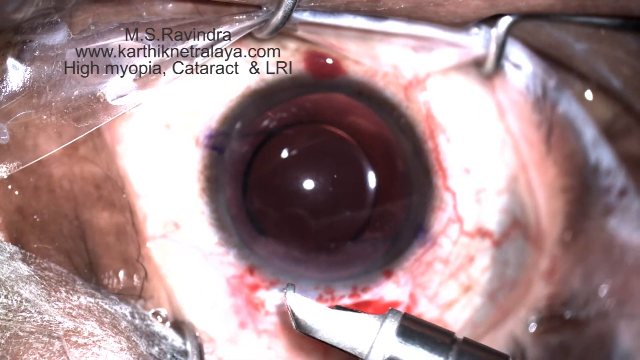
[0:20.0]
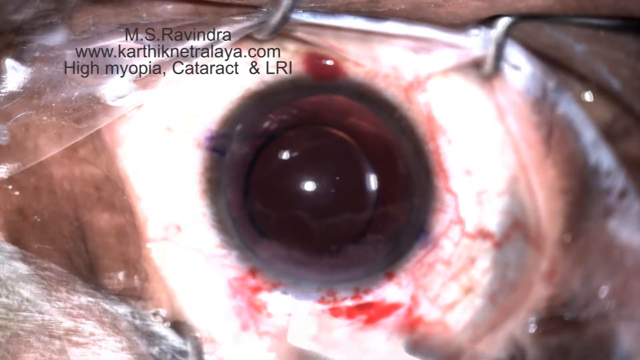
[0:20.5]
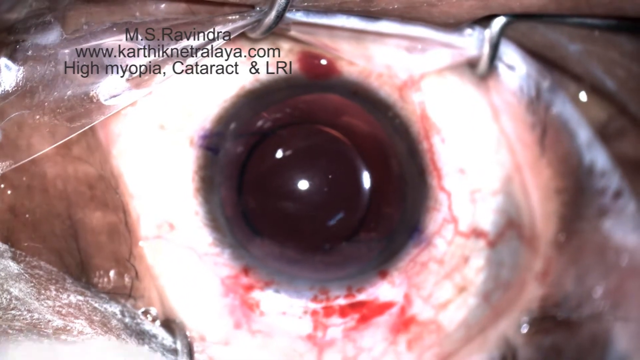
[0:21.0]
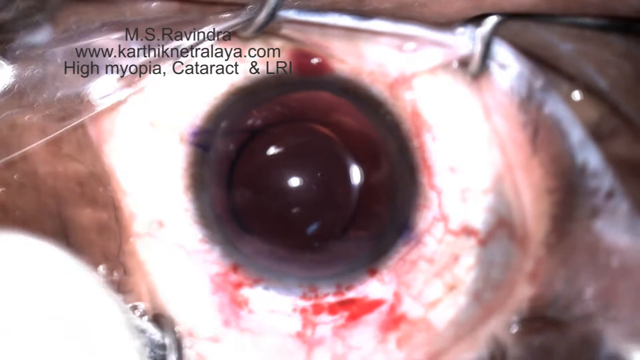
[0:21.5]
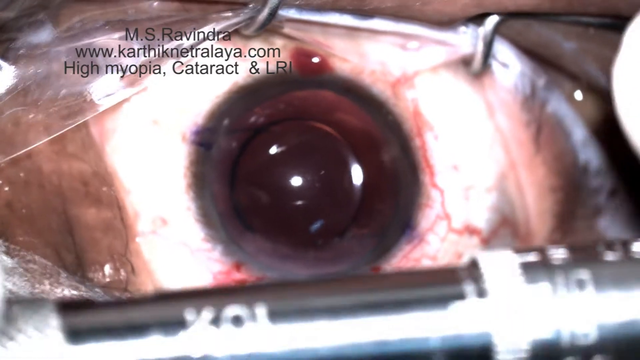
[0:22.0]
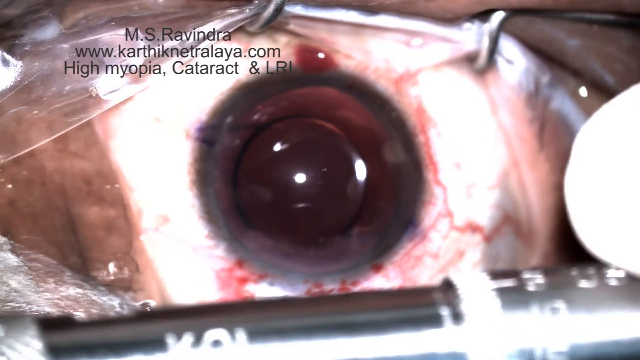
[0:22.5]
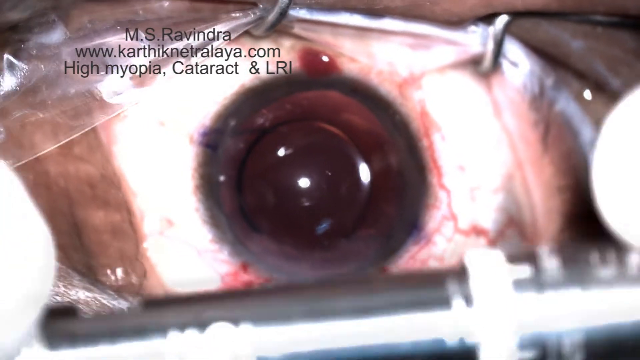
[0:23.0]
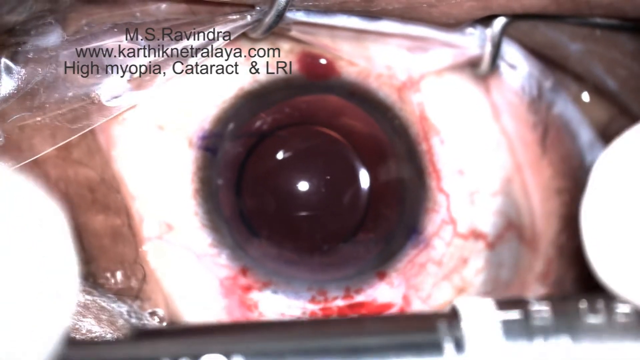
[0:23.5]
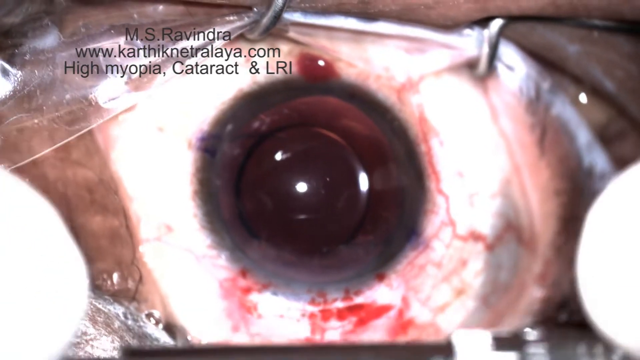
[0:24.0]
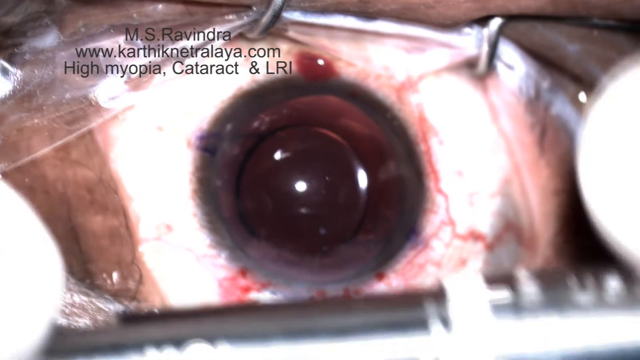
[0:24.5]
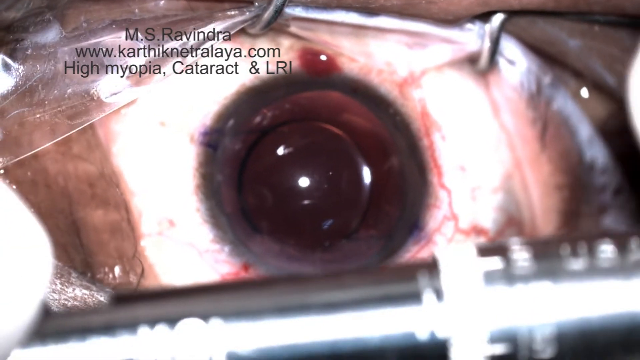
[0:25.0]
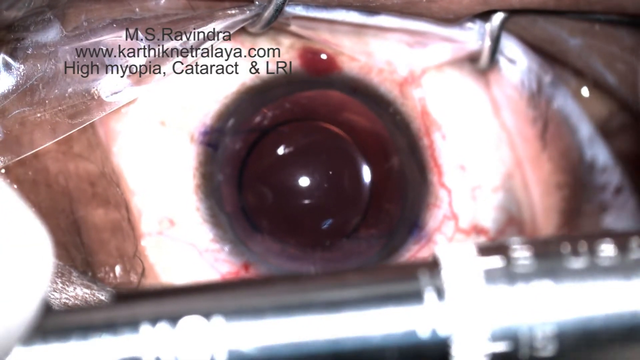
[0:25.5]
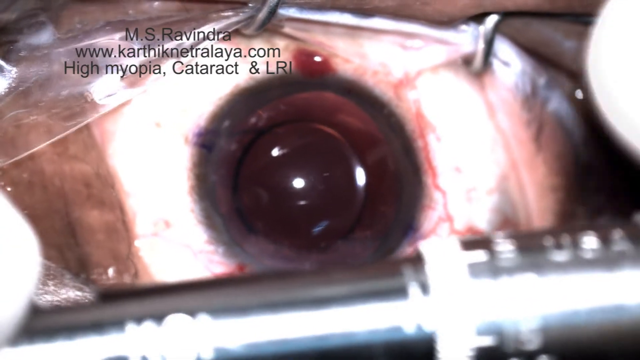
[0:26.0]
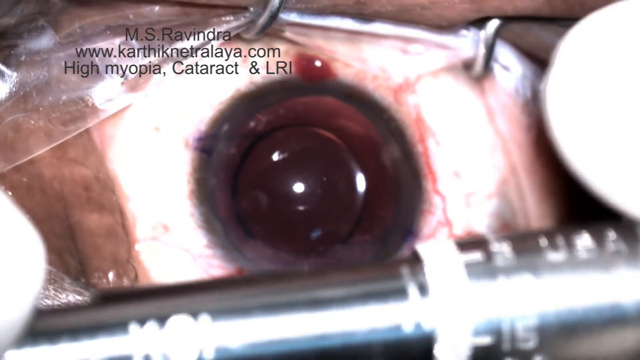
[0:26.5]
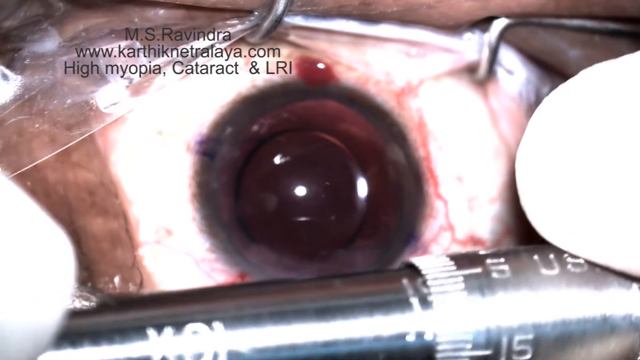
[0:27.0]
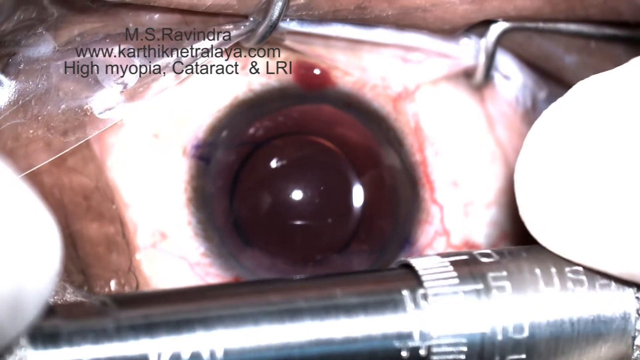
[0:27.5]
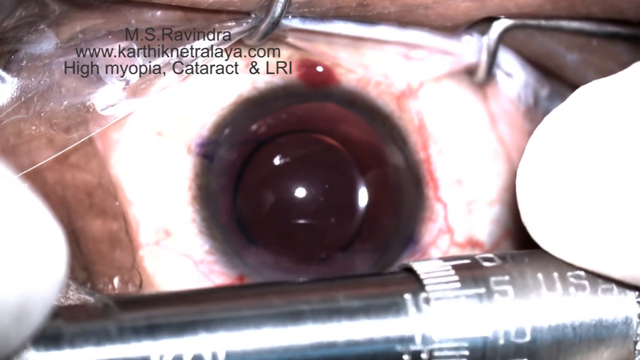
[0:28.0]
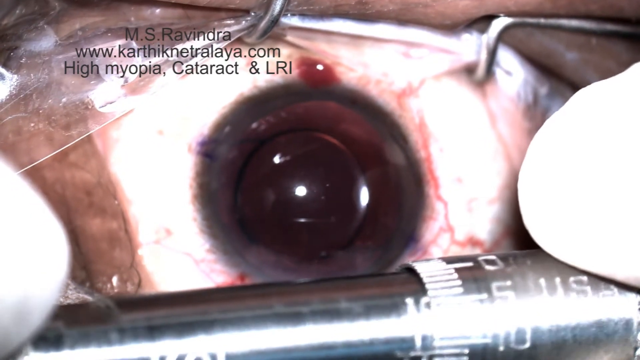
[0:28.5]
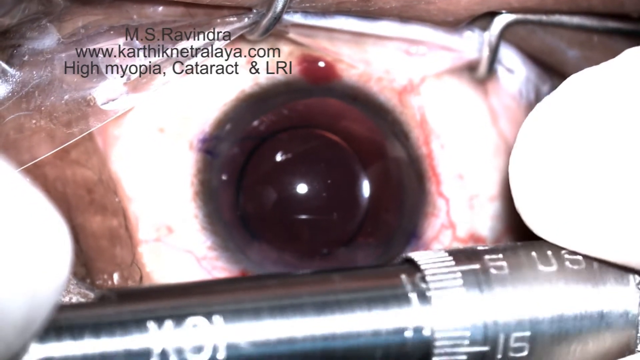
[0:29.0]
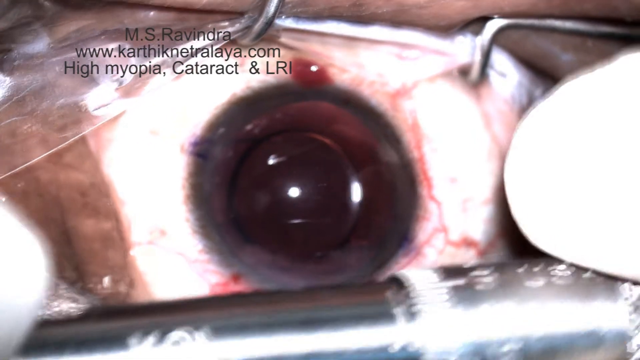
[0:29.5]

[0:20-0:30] A very close-up live view of an eyeball, with the whites visible around the iris; it looks like the eyeball or iris is exposed. Clips hold the skin or eyelid open for the surgery. White thumbs or white gloves, presumably the doctor's, hold a metal implement at the bottom of the screen and turn it very slightly. The letters "USA" are on it, but it moves too quickly to tell what the device is. In the very centre of the frame is a brown ball, and a light shines off the eyeball, suggesting a light above the eye. There is also a little drop of blood just above the eye.